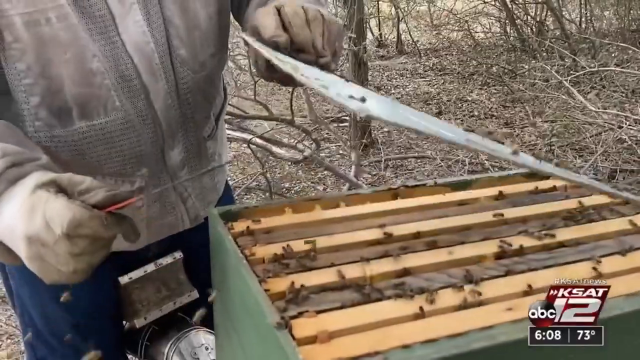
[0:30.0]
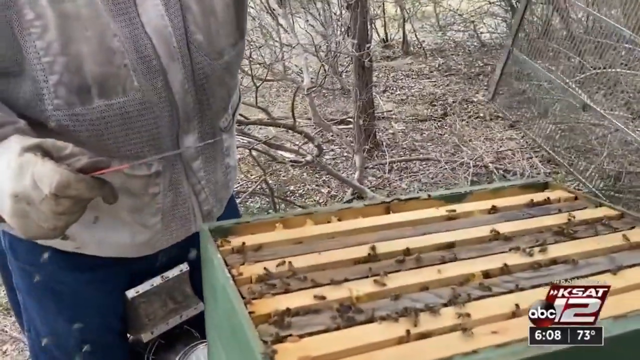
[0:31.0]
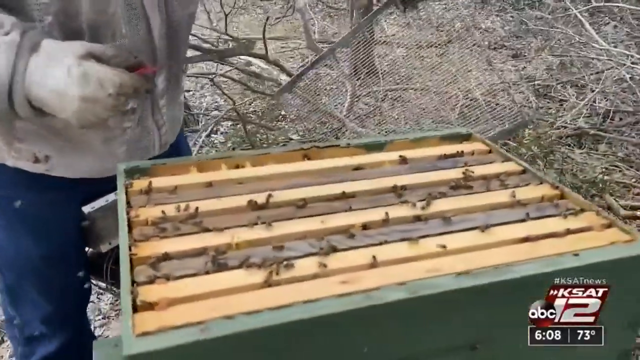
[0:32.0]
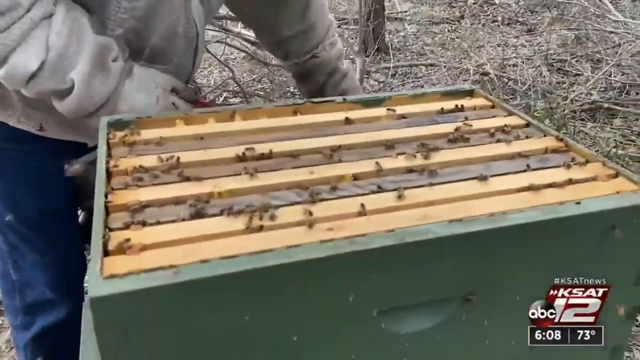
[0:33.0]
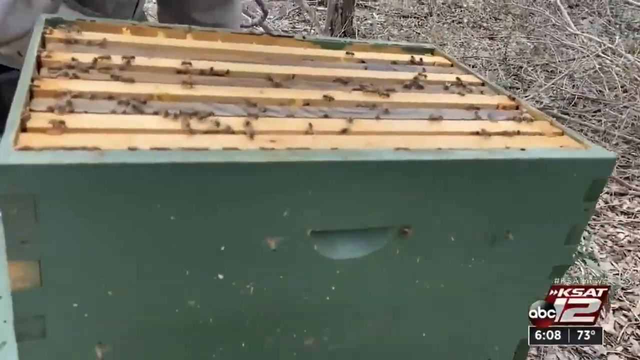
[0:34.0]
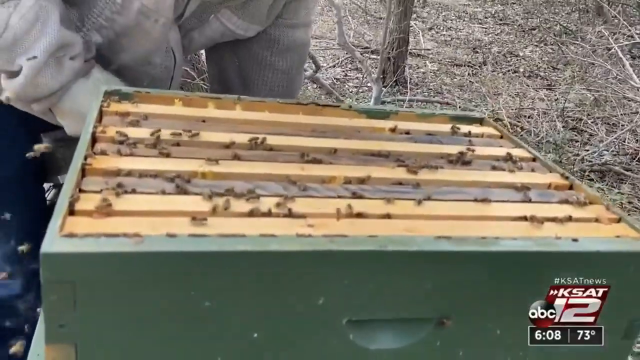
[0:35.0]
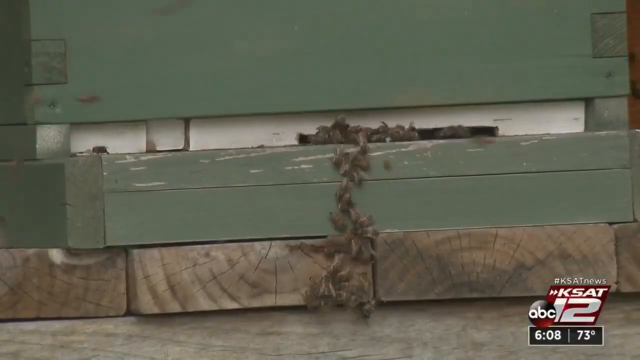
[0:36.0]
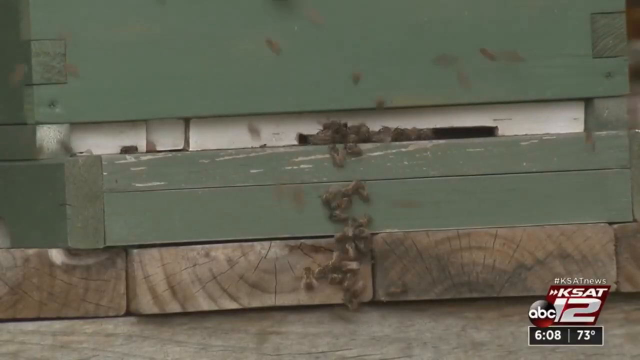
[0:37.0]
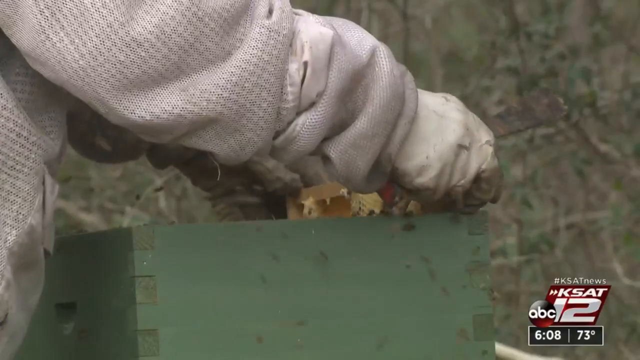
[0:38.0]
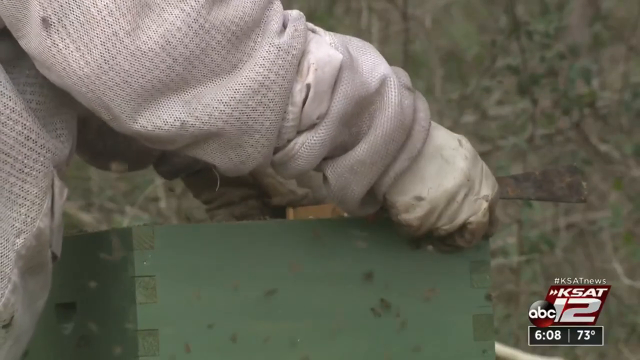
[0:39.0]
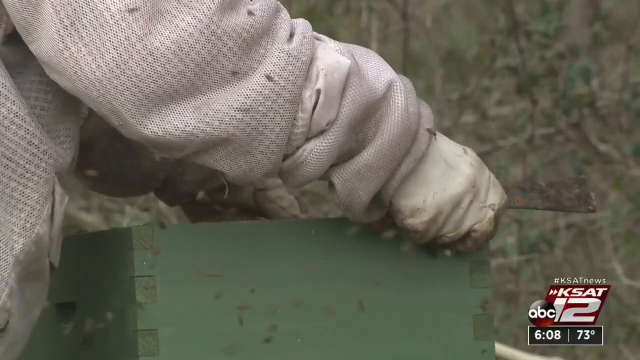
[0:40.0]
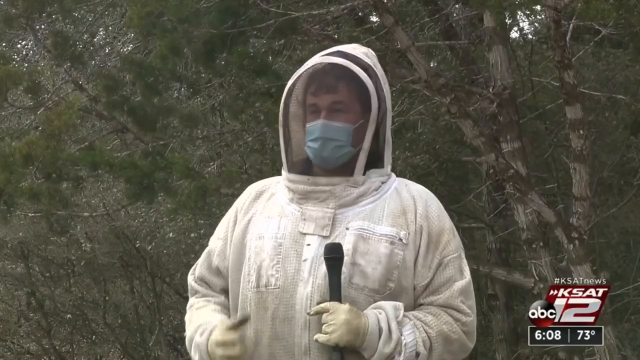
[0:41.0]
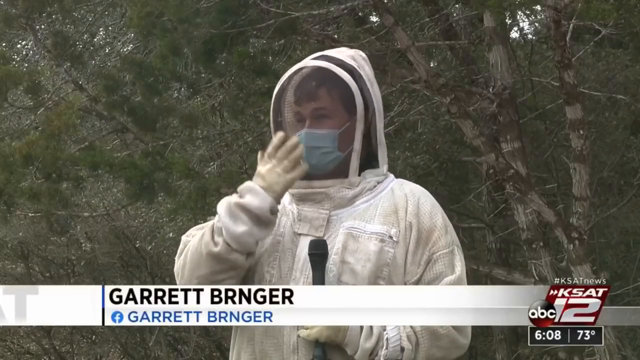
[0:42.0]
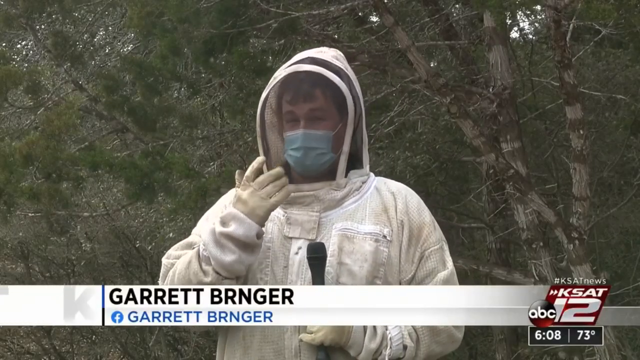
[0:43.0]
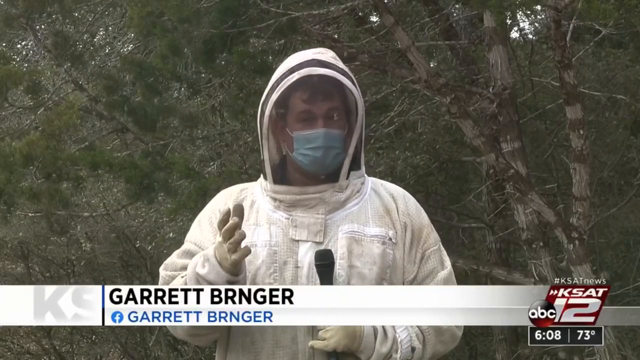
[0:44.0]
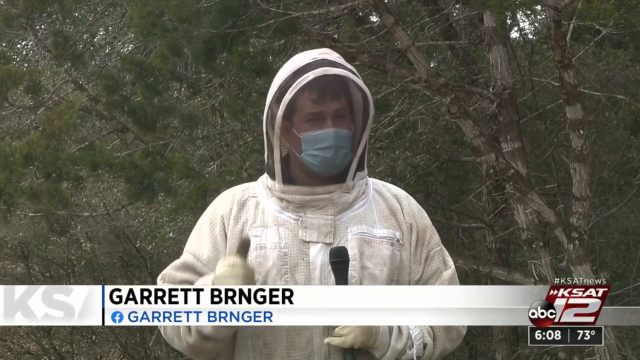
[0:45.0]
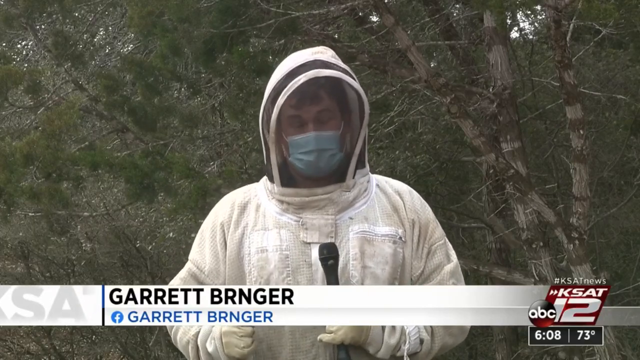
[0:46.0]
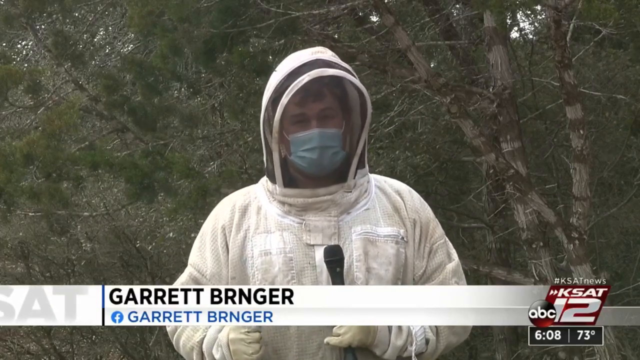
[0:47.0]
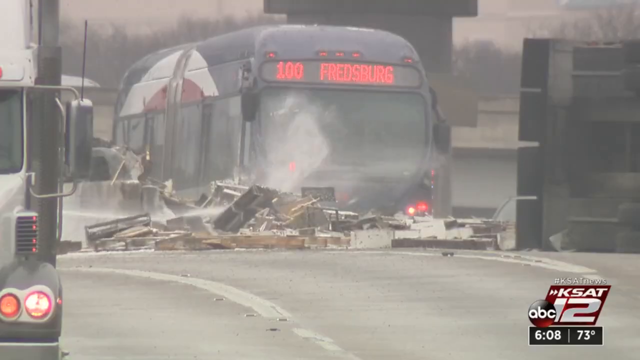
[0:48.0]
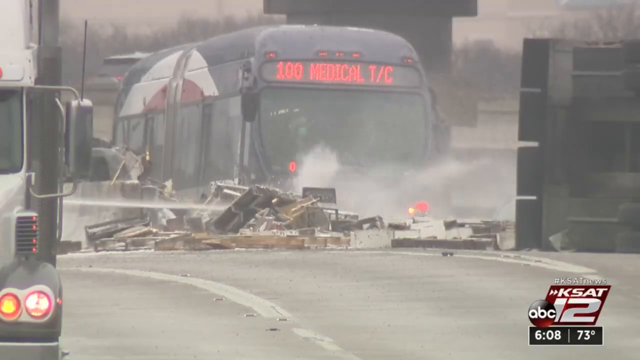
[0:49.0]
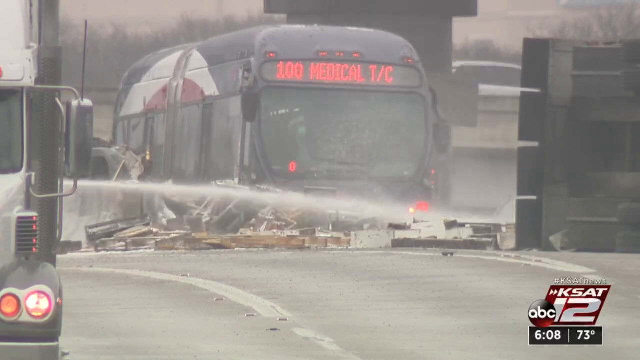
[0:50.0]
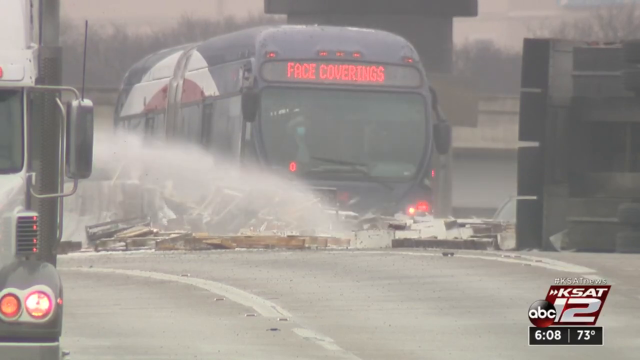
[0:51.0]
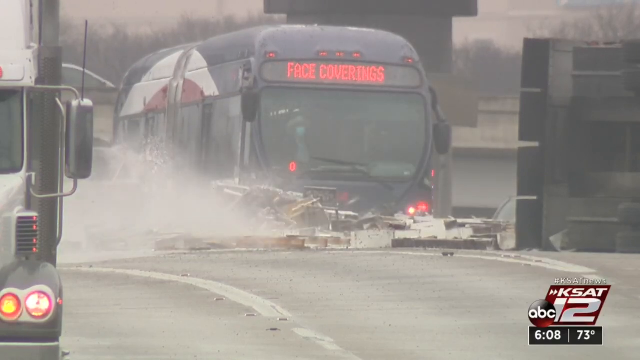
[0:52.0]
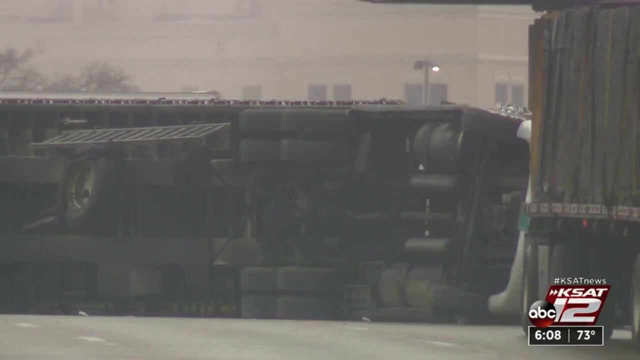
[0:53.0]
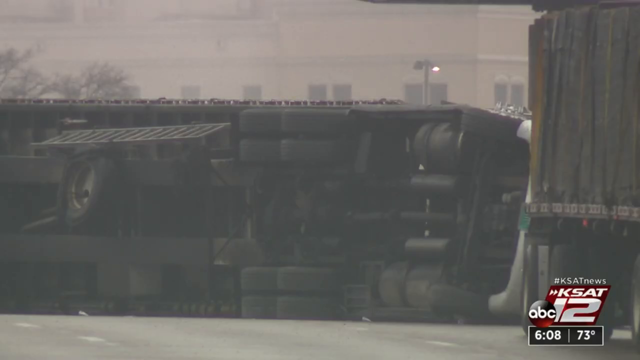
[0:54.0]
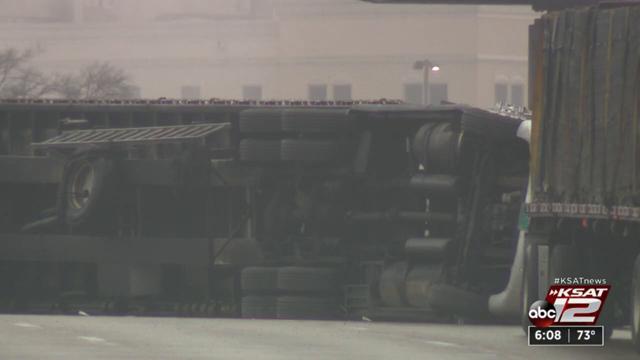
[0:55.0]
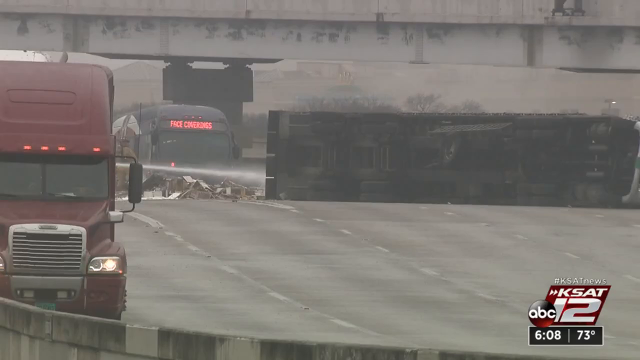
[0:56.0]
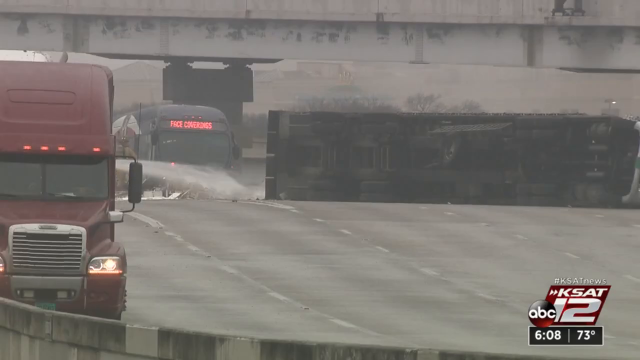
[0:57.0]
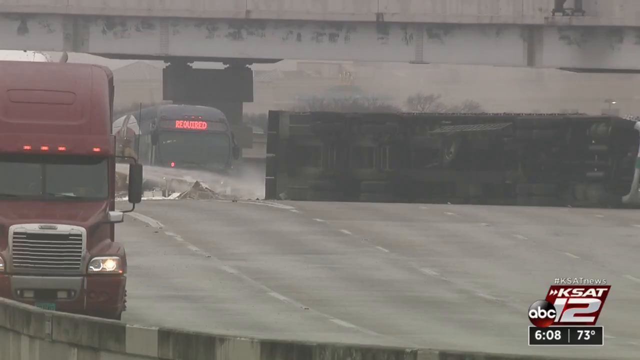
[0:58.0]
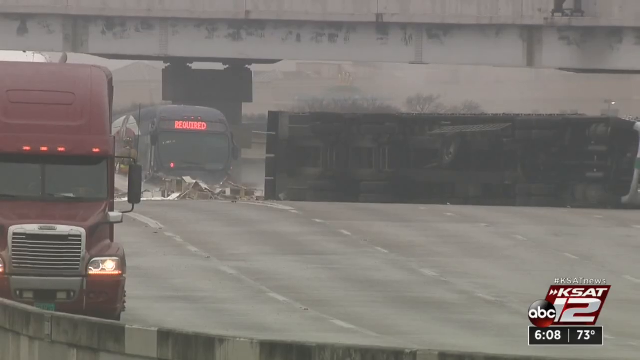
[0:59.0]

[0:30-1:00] Two hands open a screen on the top of a box, revealing a lot of bees underneath. A close-up shows the entrance for the bees, with many bees coming out; the box is green. Both hands then put the screen back down, the right hand also holding a tool. The face of the man behind the mask comes into view as he talks into a microphone held in his left hand. He wears a white protective outfit, and he also wears a face mask behind his head mask. Trees are behind him, and he is apparently outdoors. As he talks, he uses his right hand to indicate bees flying into his face. A banner at the bottom reads "Garrett Brnger" (spelled B-R-N-G-E-R). The scene then switches to the highway, showing a lot of broken parts from a divider, with possibly a bus next to it, and some water spraying out from the left.